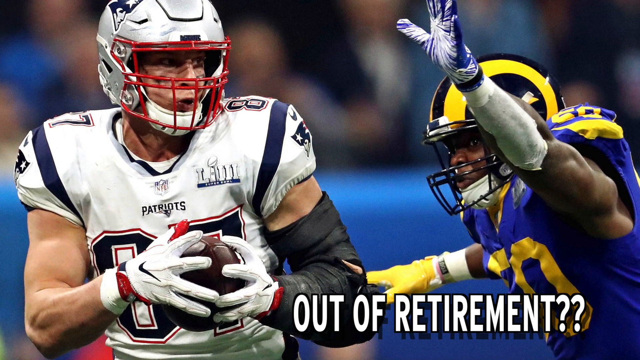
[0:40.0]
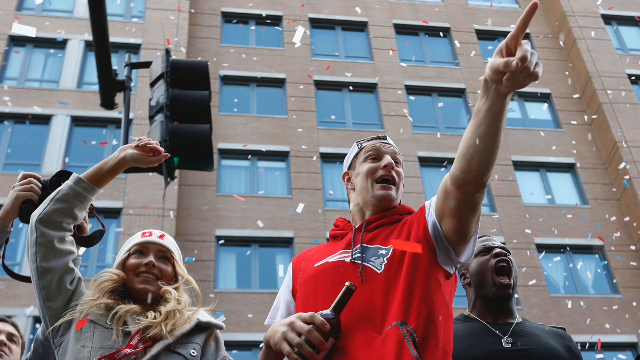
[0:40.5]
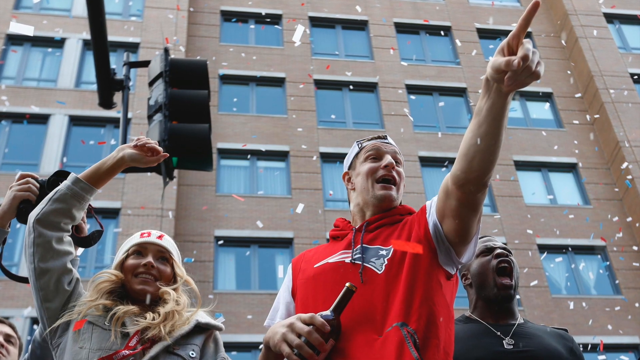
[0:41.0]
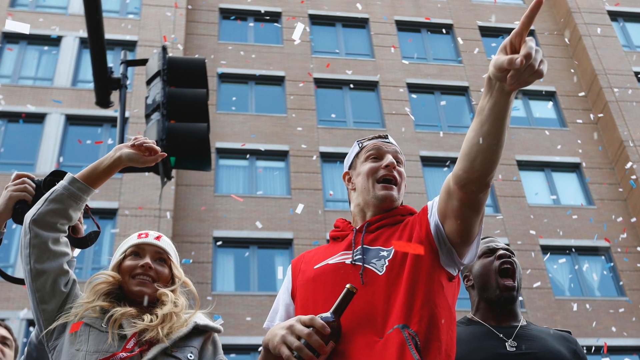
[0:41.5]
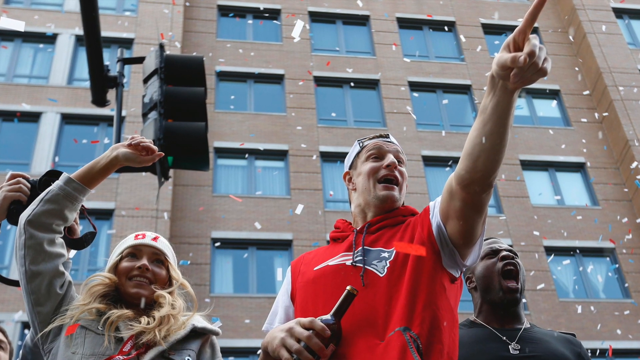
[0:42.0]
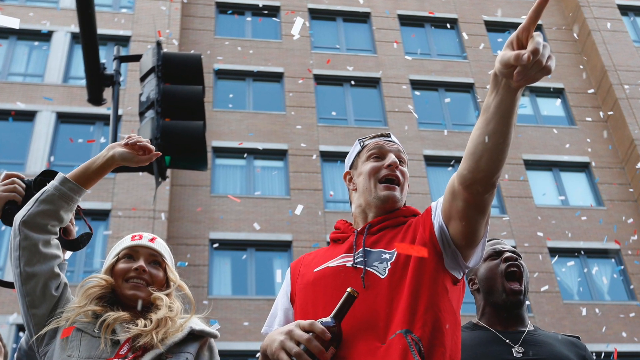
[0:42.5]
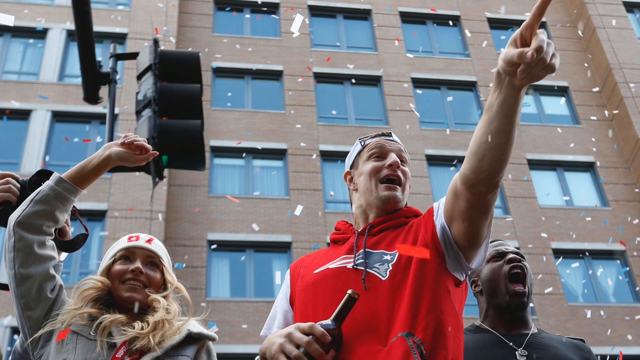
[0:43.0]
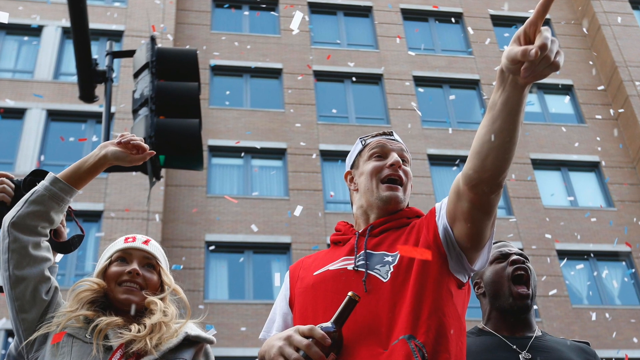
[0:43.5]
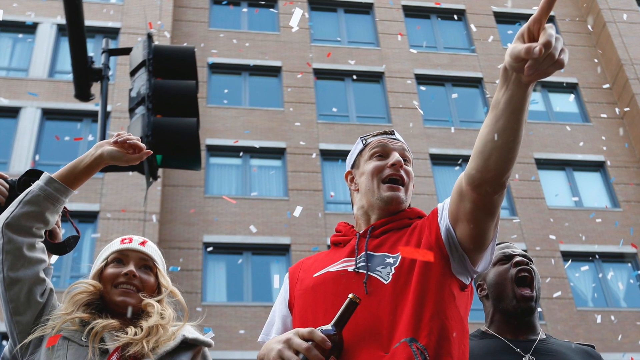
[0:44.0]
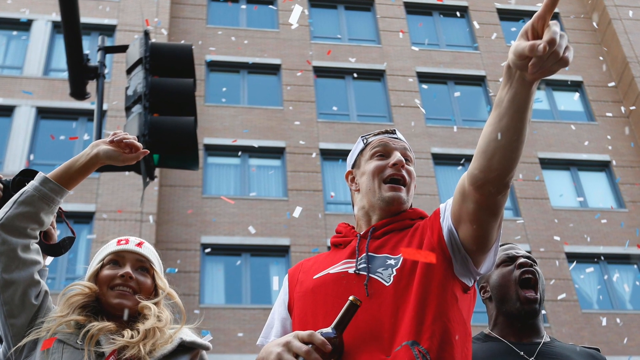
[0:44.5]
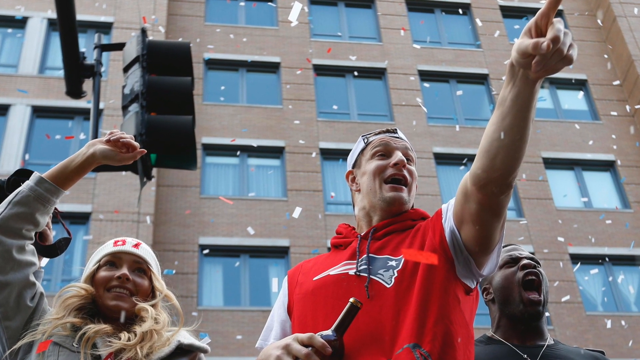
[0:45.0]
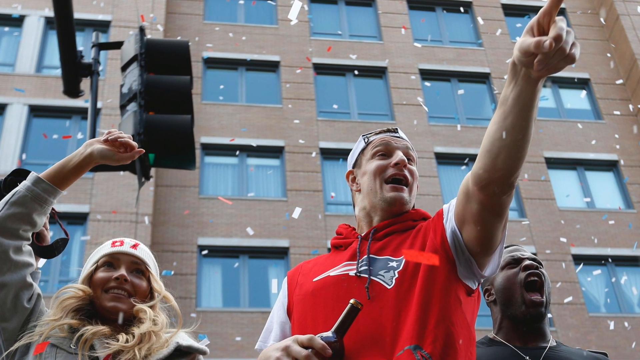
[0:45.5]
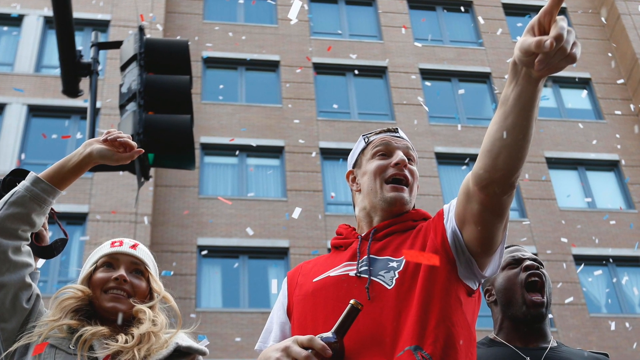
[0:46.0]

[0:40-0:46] A below-level view shows a person in a red sweater with white sleeves and a white hat, pointing into the distance. Behind him is an African-American man with his mouth agape. On his left side is a woman with blonde hair wearing a jacket and a white hat, with one hand raised into the air. Confetti falls through the air around them, and a brown building with lots of windows is behind them. The camera slowly zooms in towards them, revealing a stoplight behind them as it zooms.